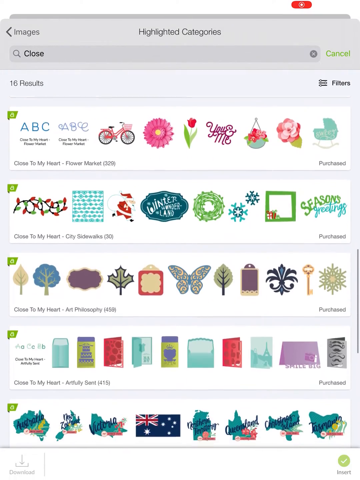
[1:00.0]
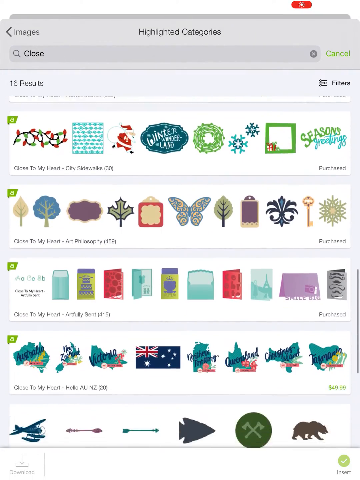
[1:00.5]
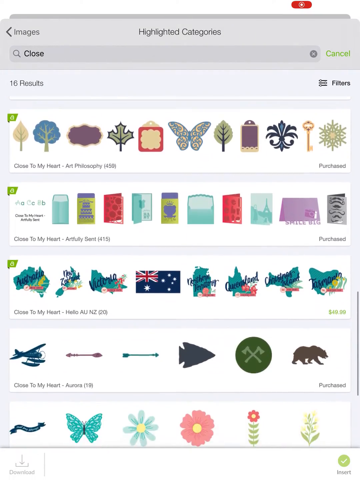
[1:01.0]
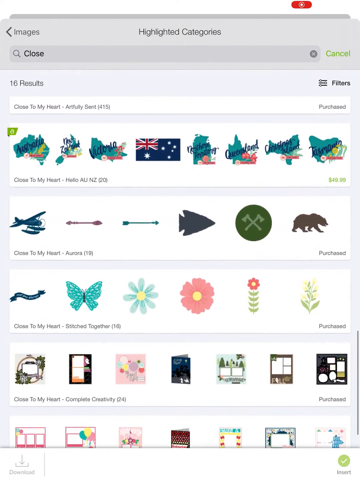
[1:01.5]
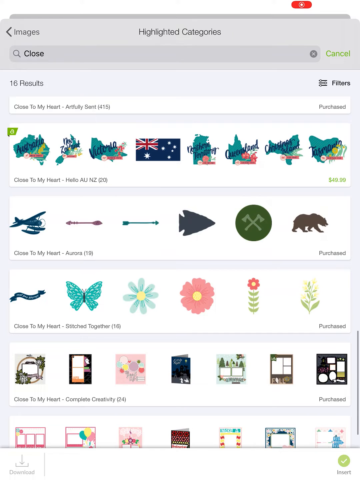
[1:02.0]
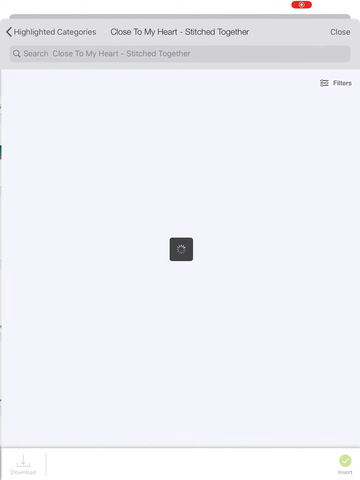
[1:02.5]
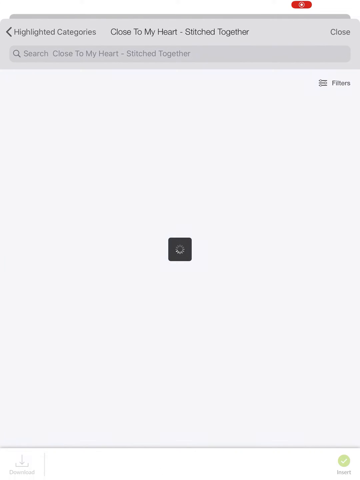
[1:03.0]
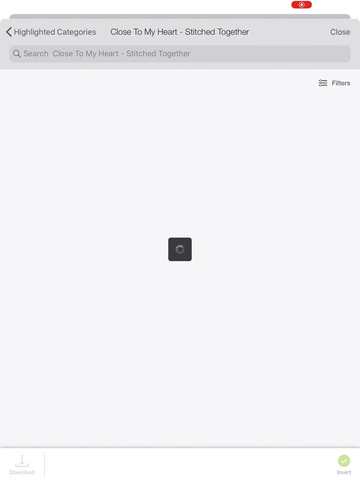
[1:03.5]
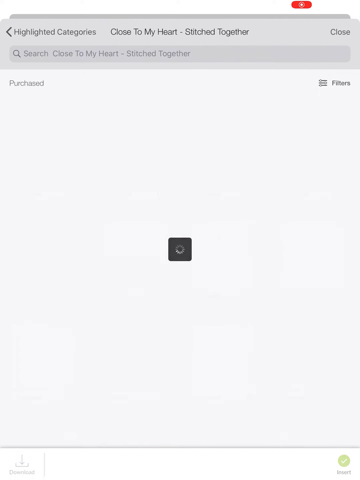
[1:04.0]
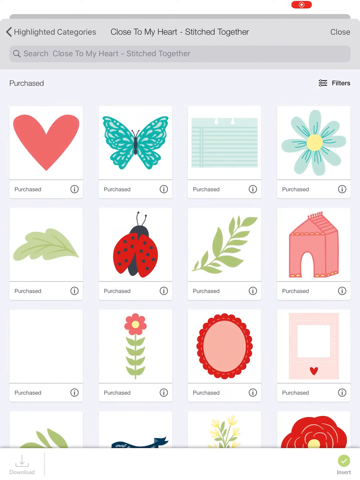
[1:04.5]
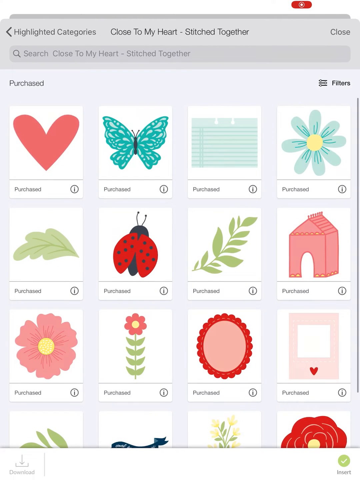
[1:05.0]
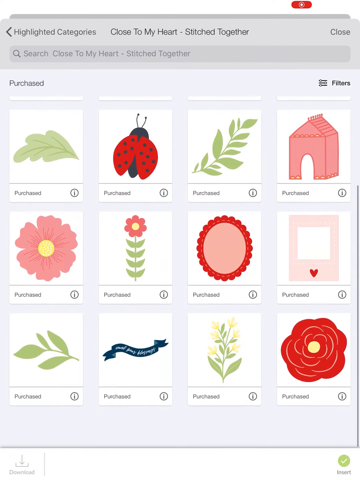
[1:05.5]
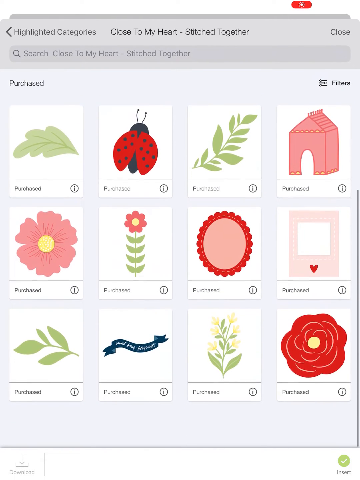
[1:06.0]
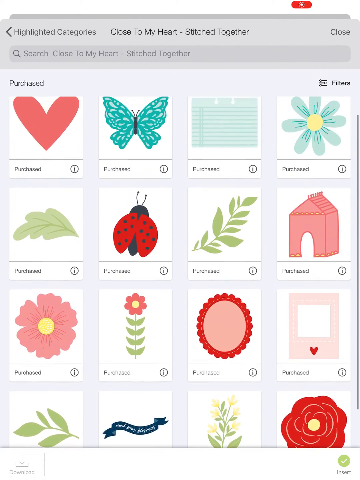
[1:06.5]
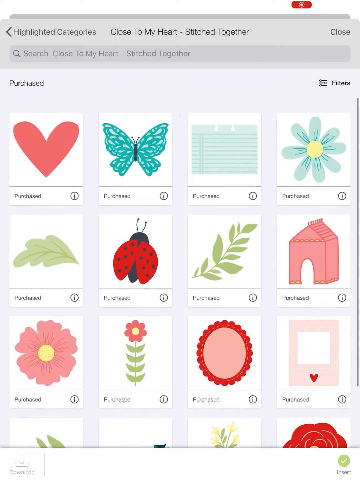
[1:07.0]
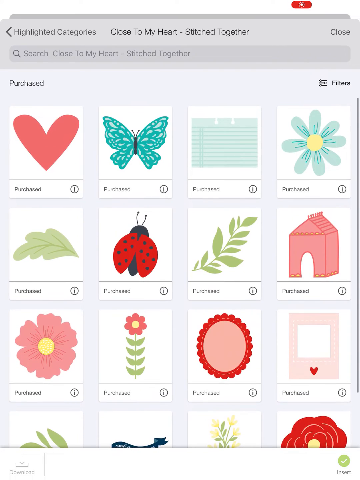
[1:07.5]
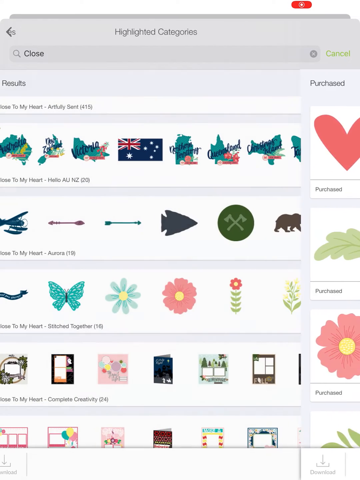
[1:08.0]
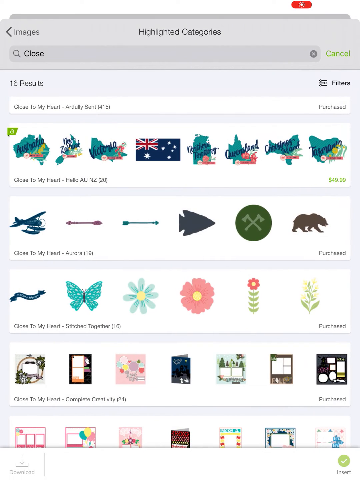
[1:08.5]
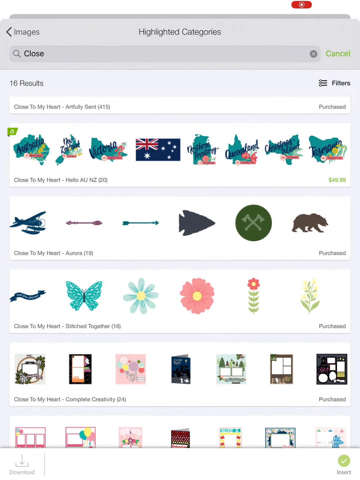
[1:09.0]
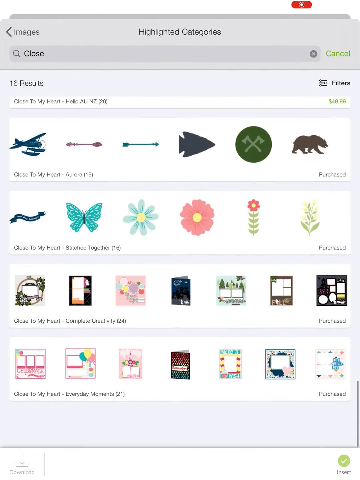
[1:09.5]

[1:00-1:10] The screen of a mobile device is open to an app that displays images for selection. The images, all sorts of vector images, include flowers, leaves, trees and butterflies, as well as quotes. They are displayed in rows, and the screen continues to scroll downward to show more of them. The image selection then changes to images of butterflies, flowers and leaves, with a ladybird on the second row. The screen changes again as the person goes backward to view the previous sets of images.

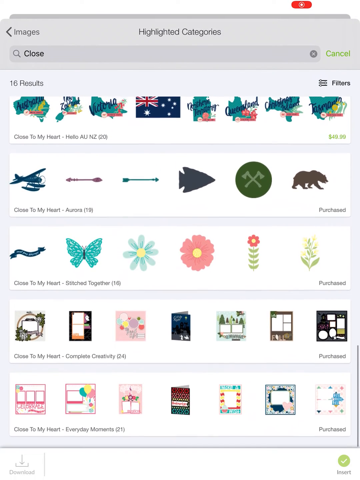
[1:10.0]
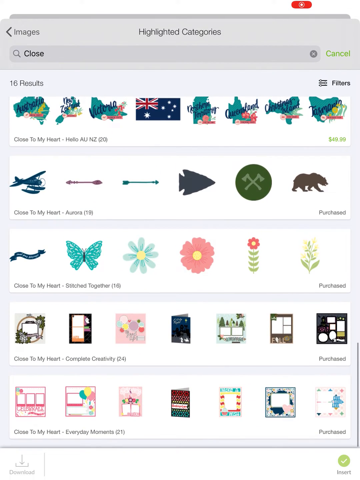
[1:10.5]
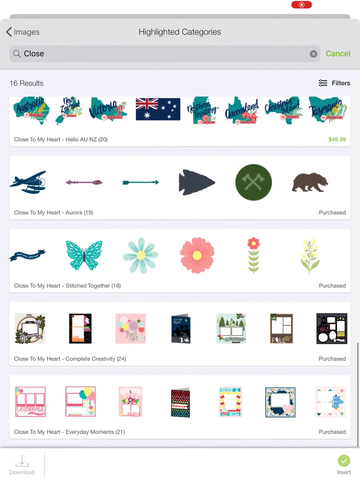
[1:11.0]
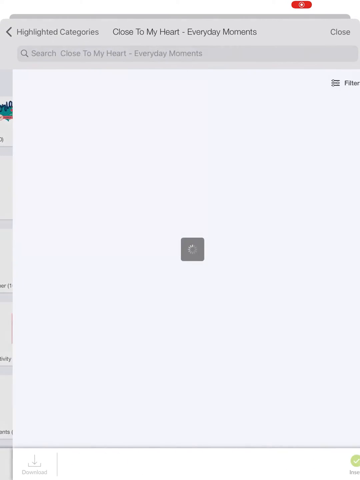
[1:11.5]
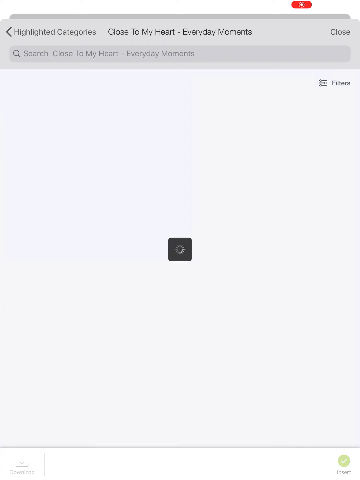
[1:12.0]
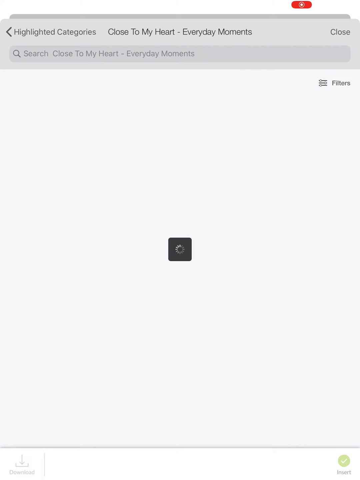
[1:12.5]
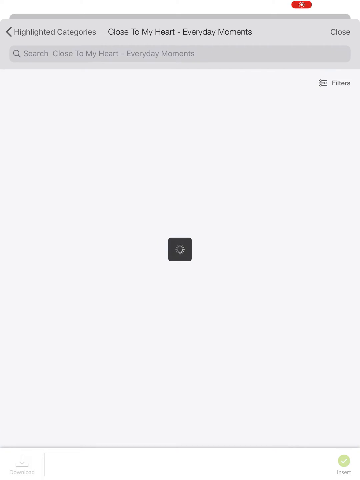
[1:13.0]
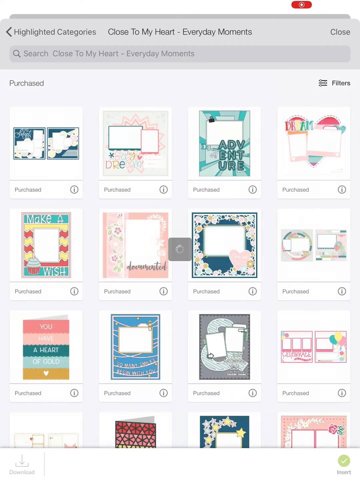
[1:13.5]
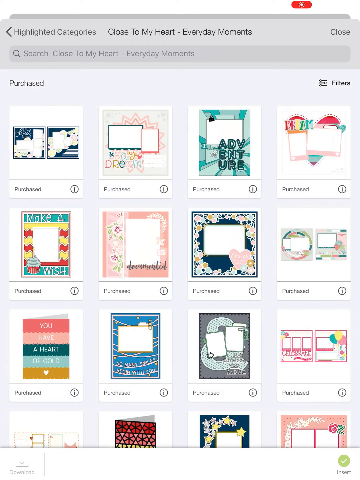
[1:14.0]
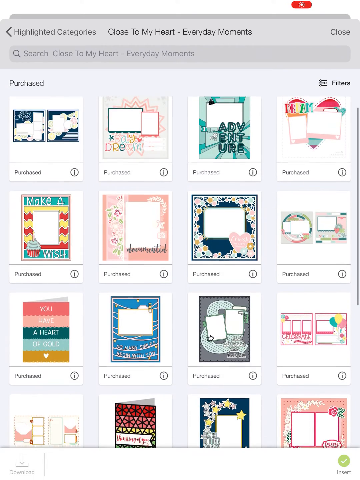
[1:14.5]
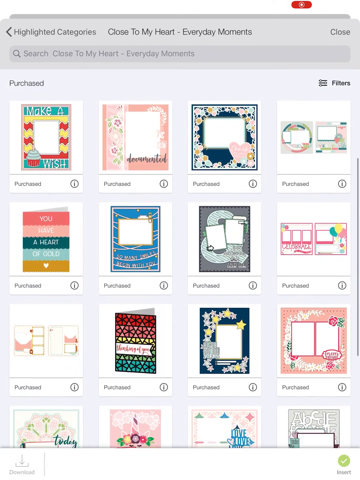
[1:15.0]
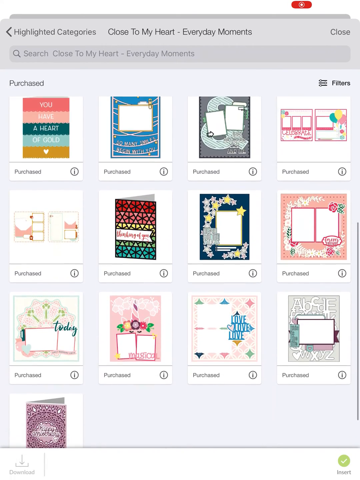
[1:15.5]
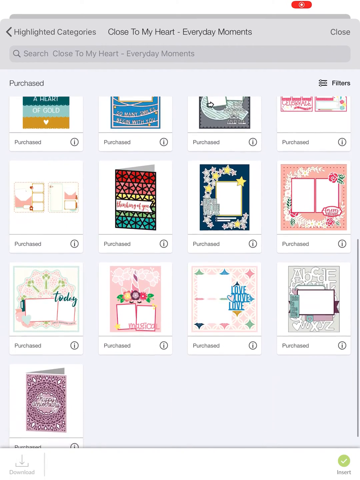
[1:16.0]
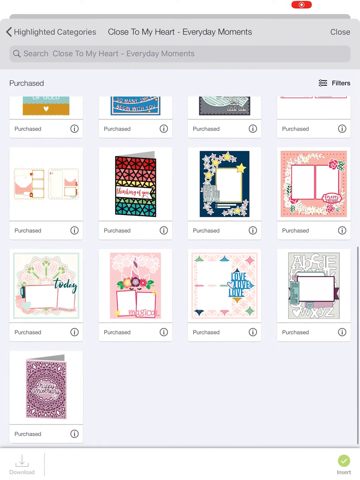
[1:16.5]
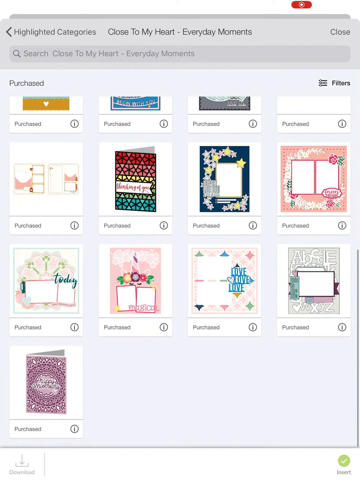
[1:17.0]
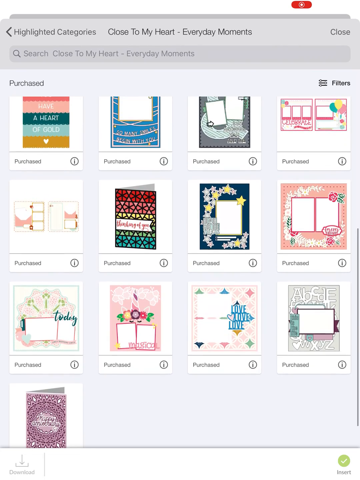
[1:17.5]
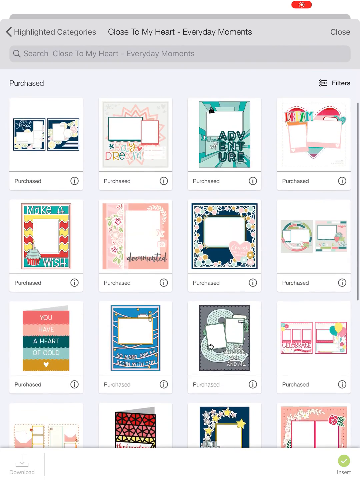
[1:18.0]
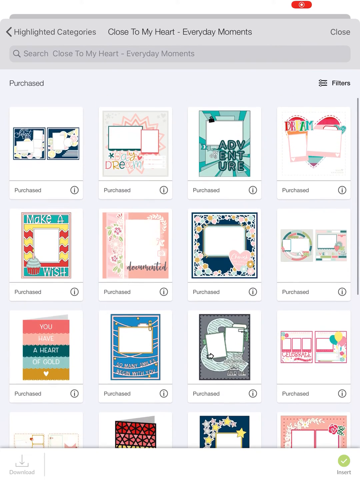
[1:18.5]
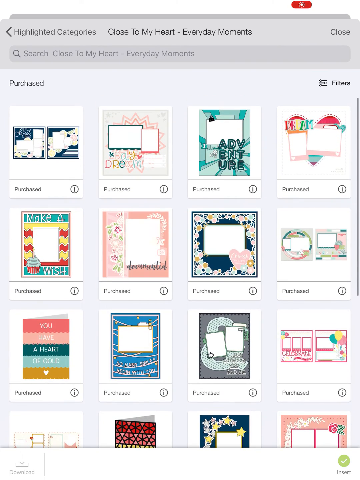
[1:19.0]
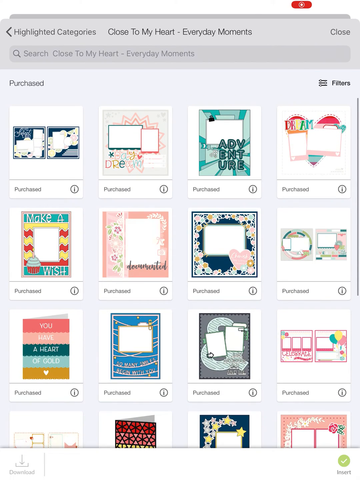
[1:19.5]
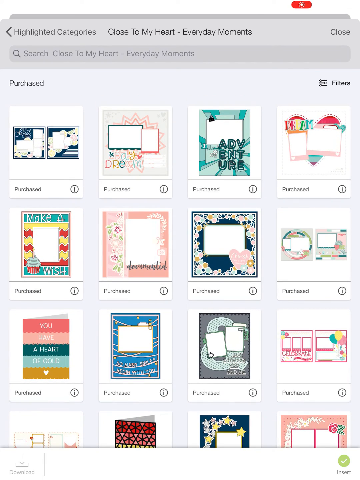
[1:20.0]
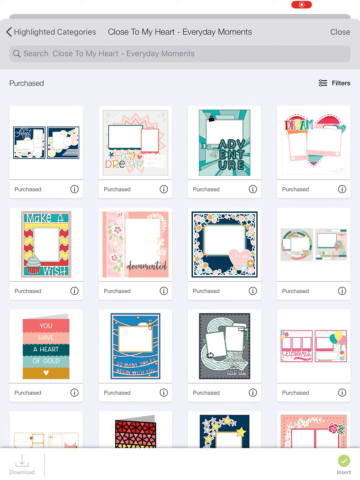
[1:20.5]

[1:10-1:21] The screen of a mobile device is open to an app that displays different images for selection, including plants, animals, buildings, objects and quotes. The selection changes to images of various greeting cards of different colours and types, showing their front covers. The screen is scrolled down to view the entire selection of greeting cards and then scrolls back up to the top. There are only about five to six rows of greeting cards, with four cards in each row on the screen. The greeting cards remain in view until the end of the segment.